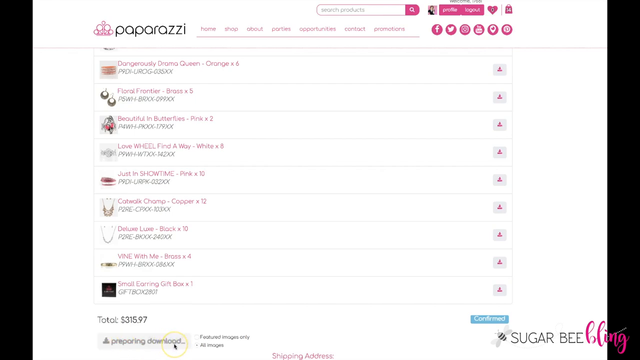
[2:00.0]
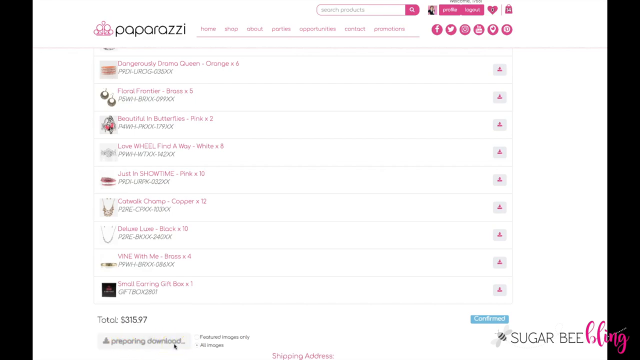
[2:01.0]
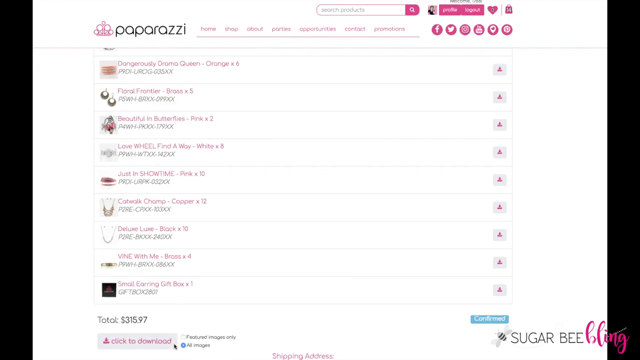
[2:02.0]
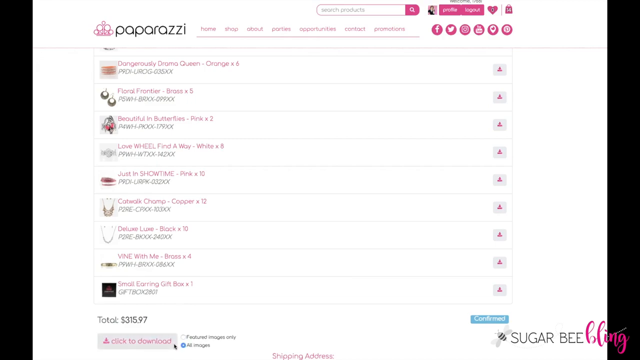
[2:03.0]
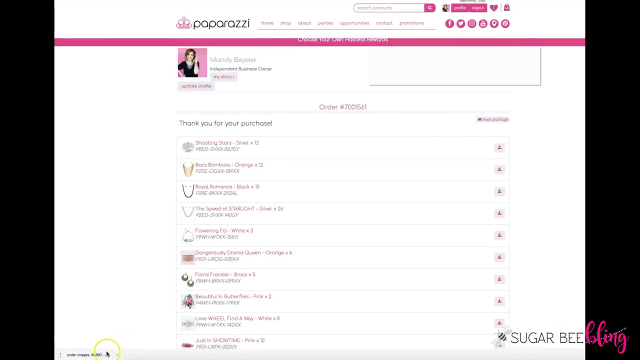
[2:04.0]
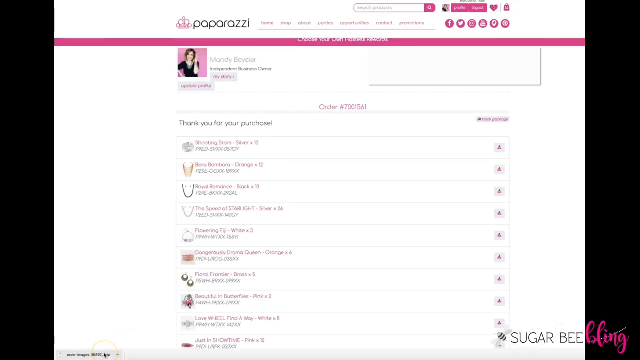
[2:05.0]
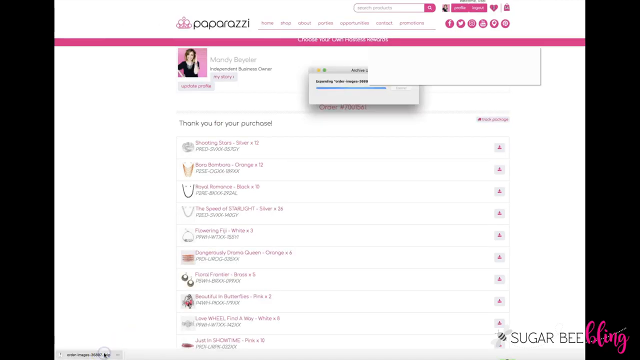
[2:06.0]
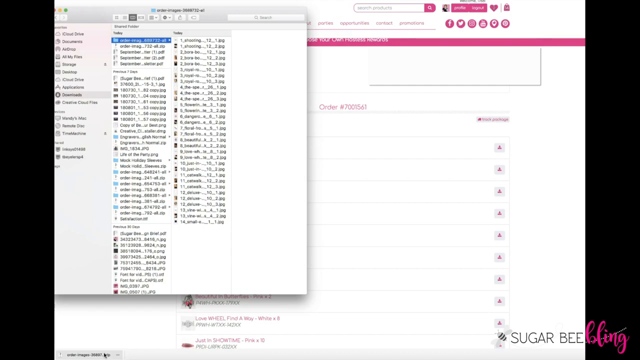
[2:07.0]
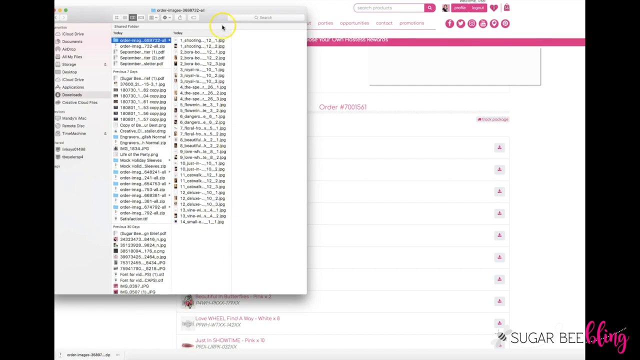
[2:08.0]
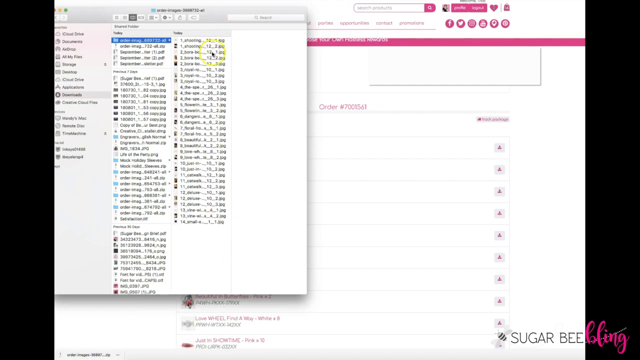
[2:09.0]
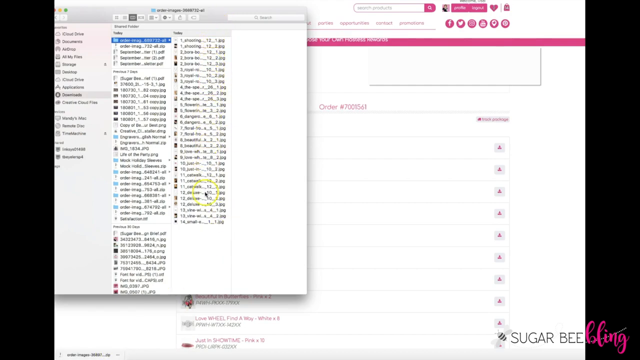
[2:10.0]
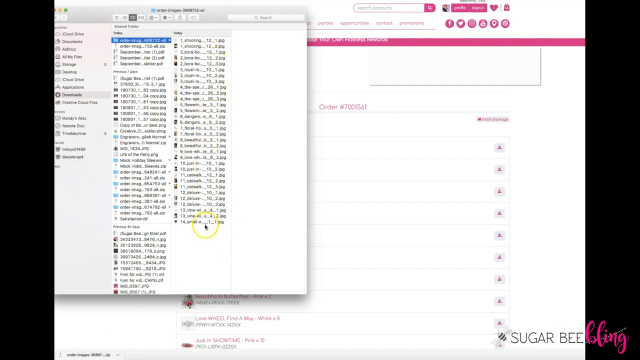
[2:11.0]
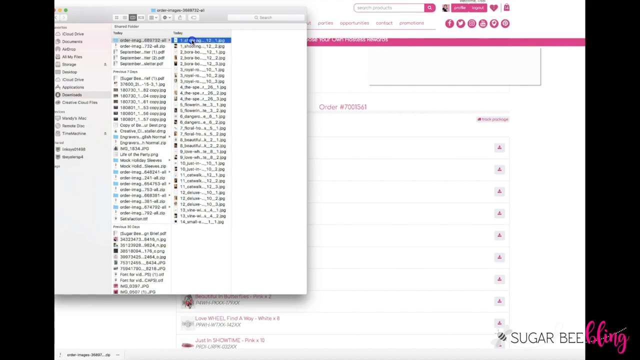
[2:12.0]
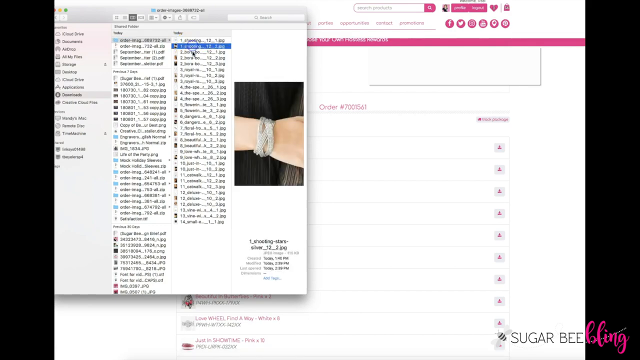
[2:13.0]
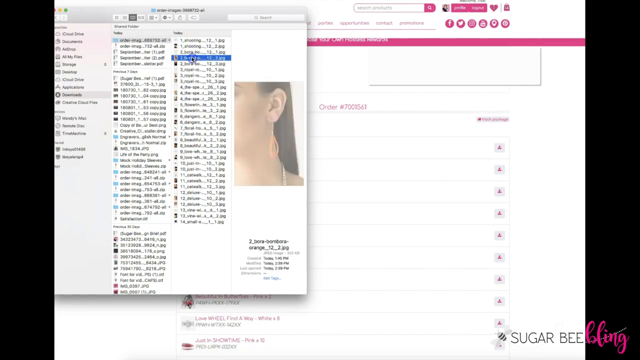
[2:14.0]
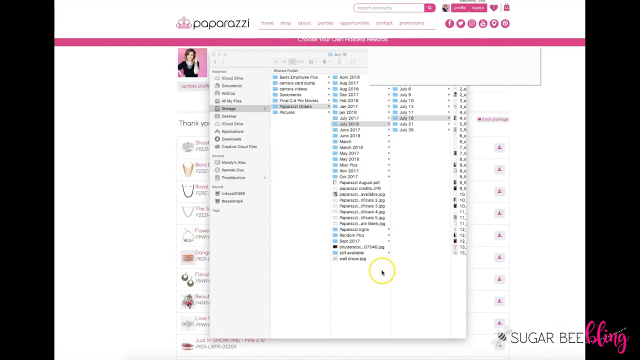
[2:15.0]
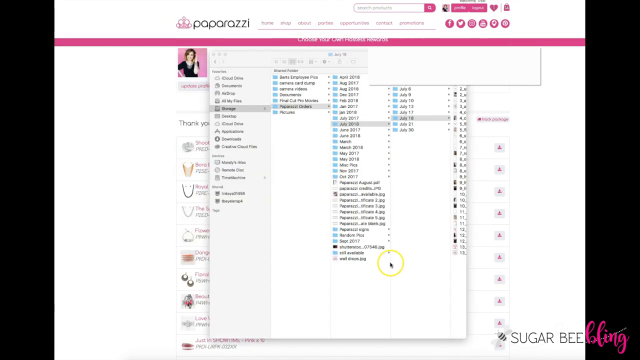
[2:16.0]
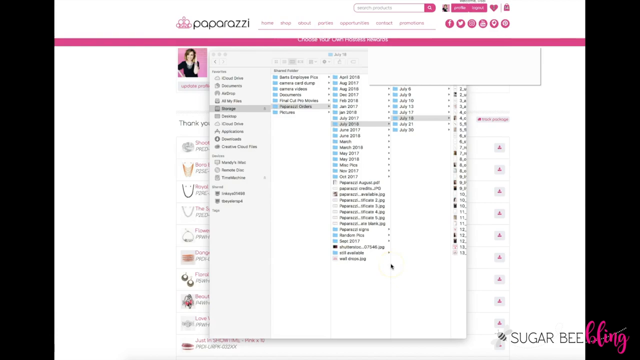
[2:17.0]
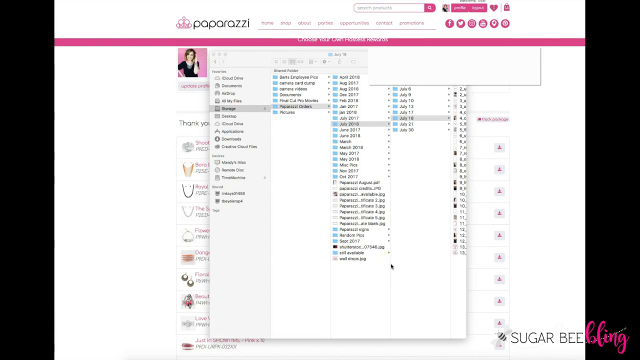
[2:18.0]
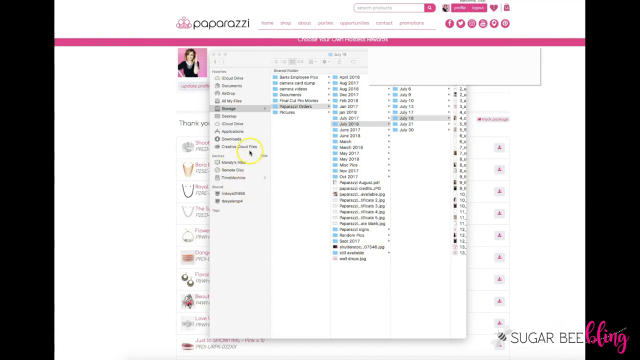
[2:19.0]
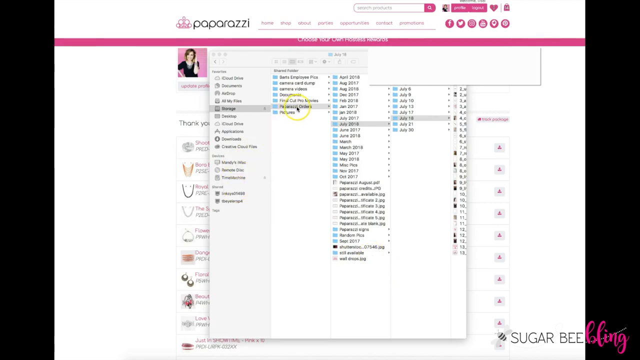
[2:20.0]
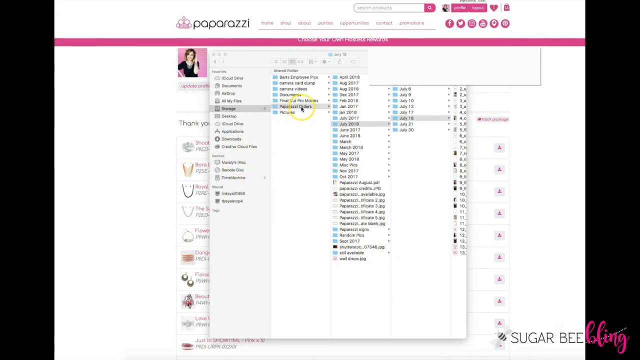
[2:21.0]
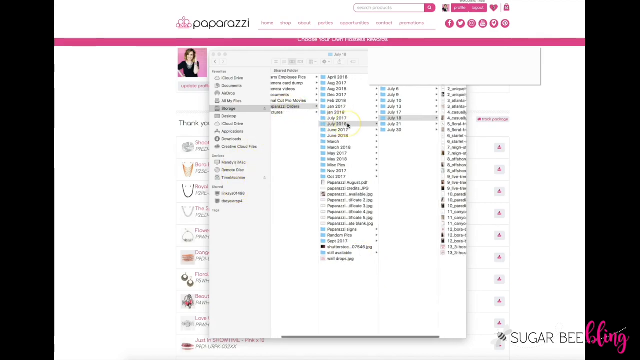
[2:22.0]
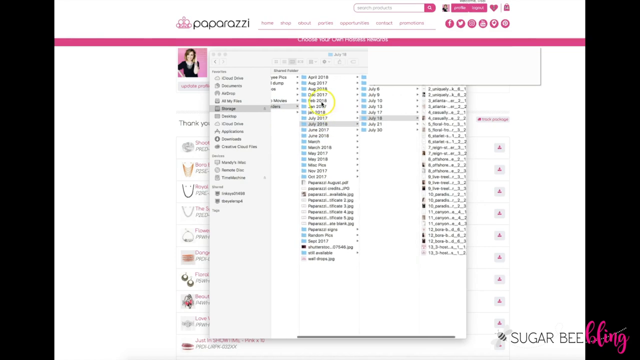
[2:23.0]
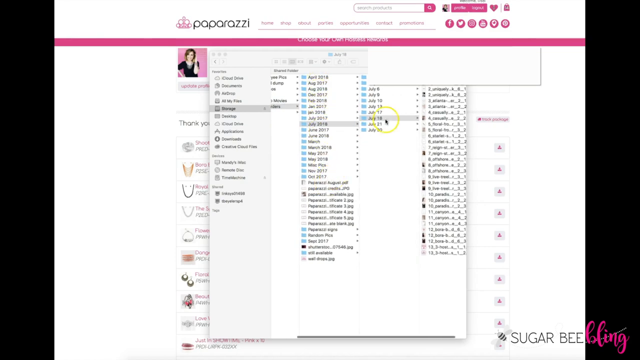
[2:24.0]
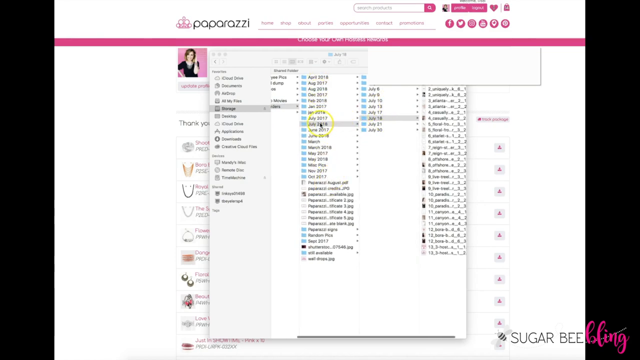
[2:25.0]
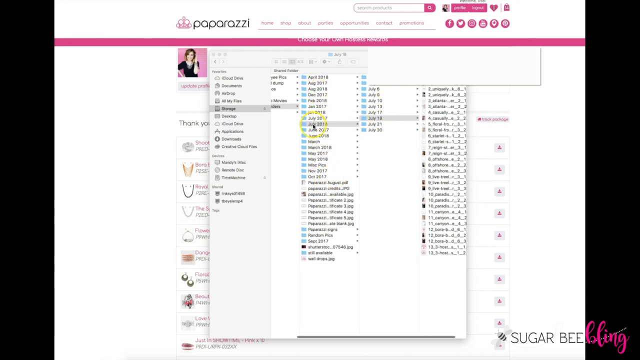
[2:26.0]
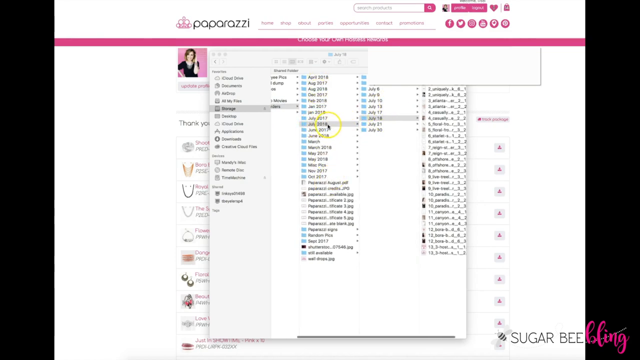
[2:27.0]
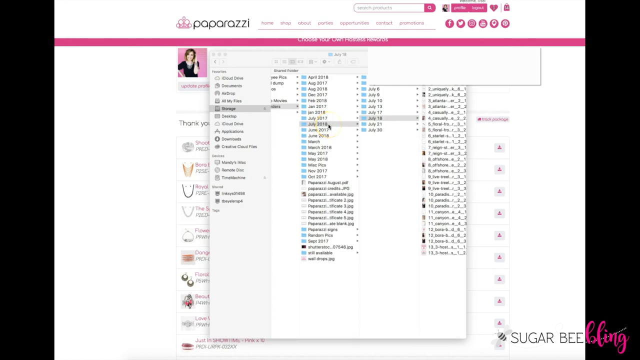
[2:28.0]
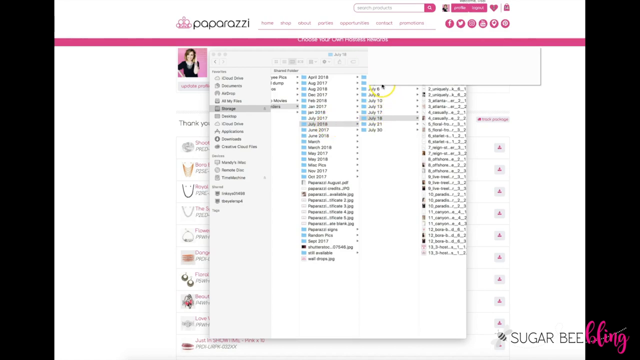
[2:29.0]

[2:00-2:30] The Paparazzi website shows an order, and AI images are downloaded from it. The video then goes through folders: first a Paparazzi orders folder, next a folder named with a month and year, containing folders for the days of that month. Inside a day folder are the downloaded files: one photo shows only the jewelry, and a second photo shows how to wear the jewelry, apparently on an AI model. The account apparently belongs to an independent owner on the website.